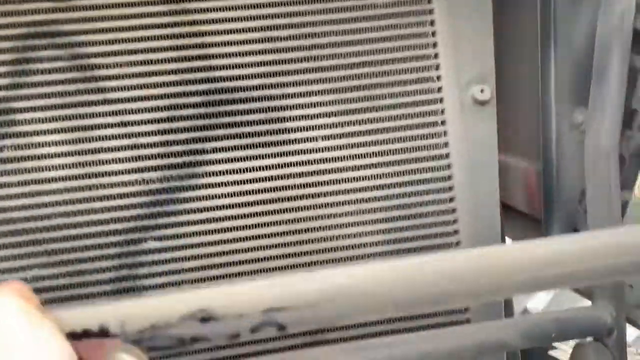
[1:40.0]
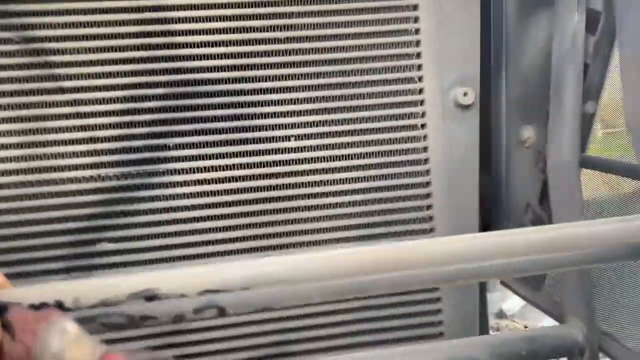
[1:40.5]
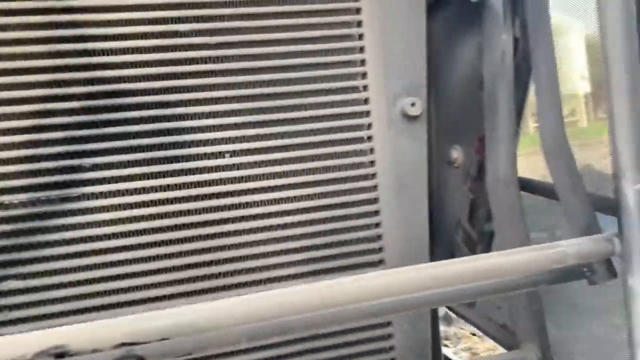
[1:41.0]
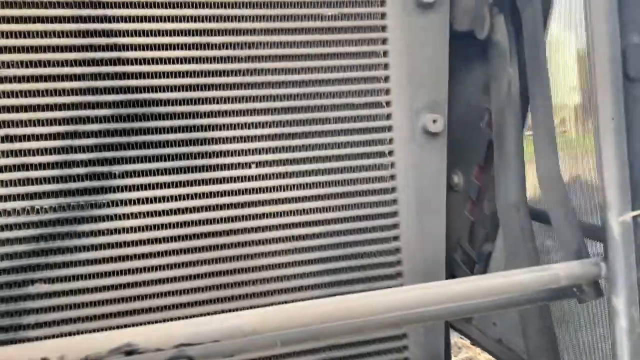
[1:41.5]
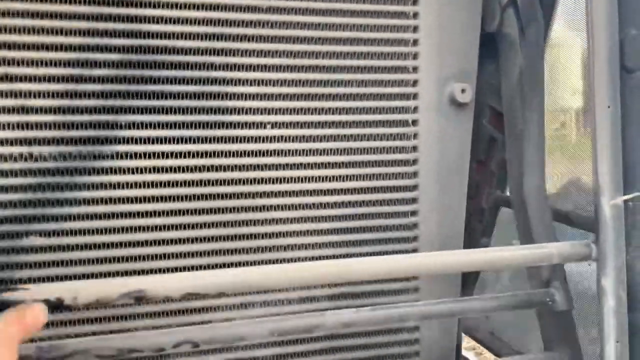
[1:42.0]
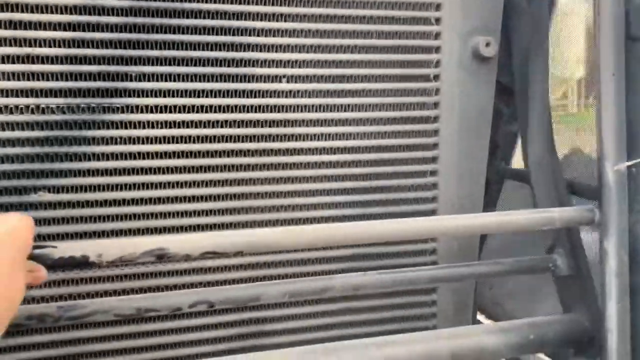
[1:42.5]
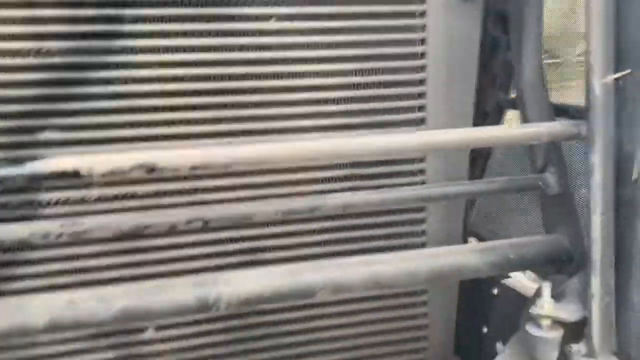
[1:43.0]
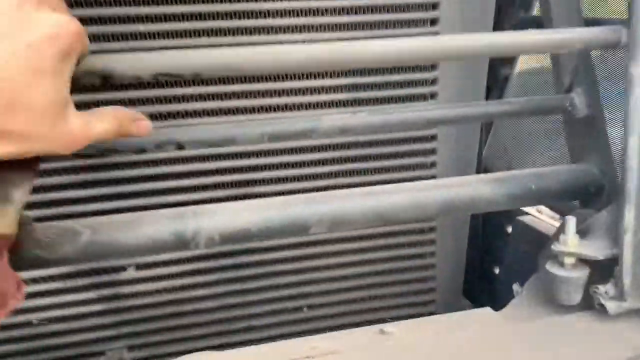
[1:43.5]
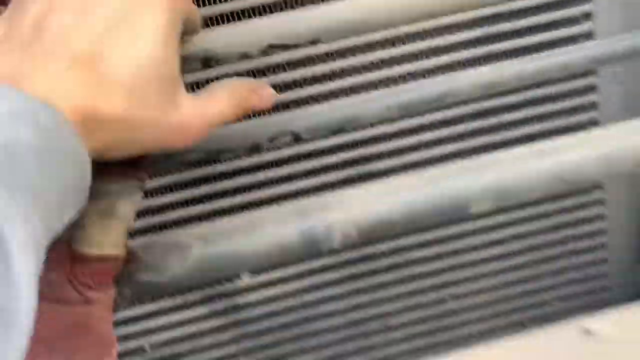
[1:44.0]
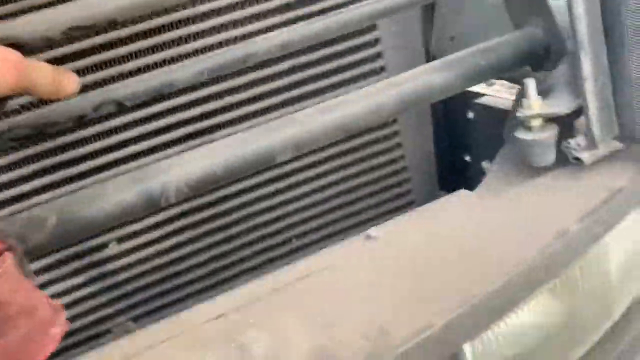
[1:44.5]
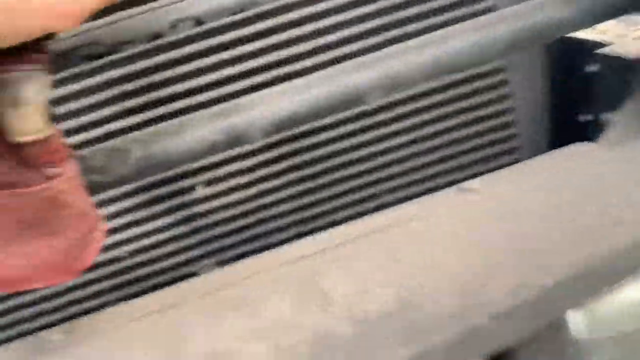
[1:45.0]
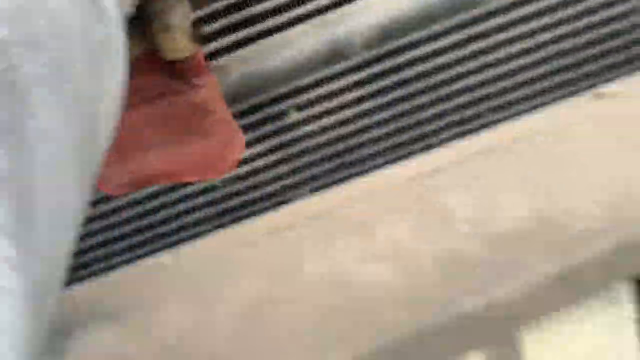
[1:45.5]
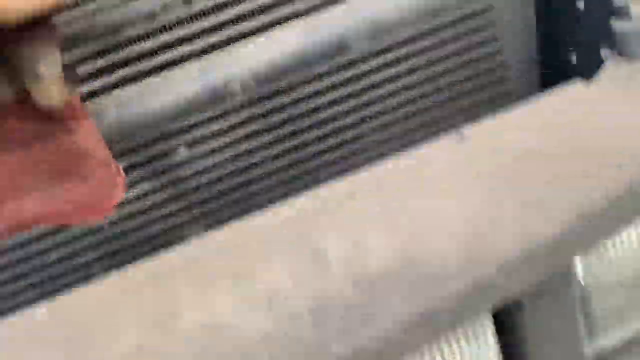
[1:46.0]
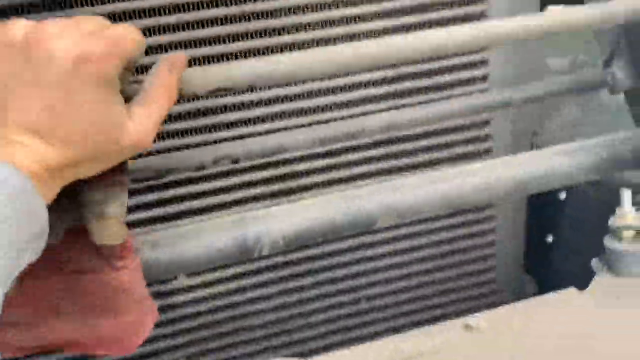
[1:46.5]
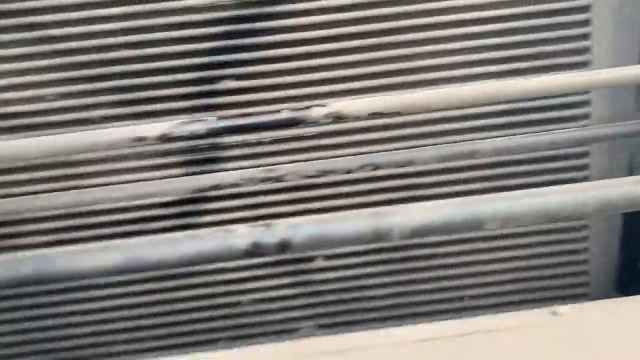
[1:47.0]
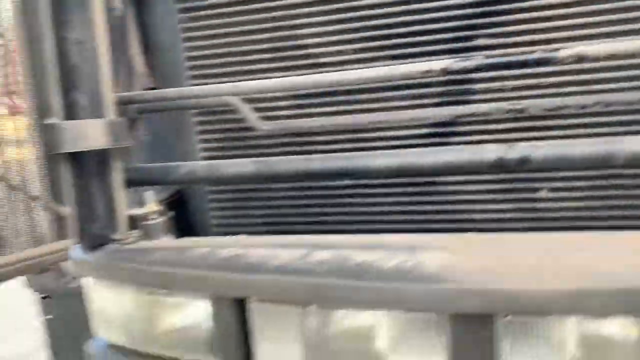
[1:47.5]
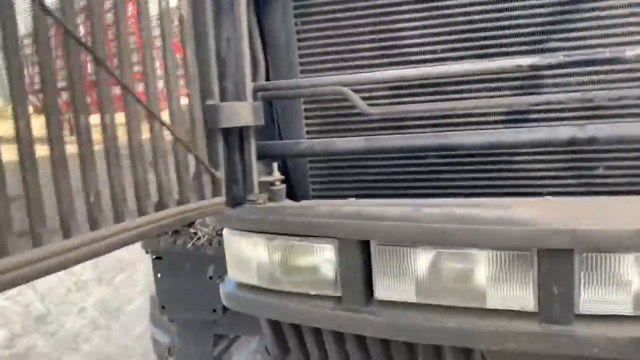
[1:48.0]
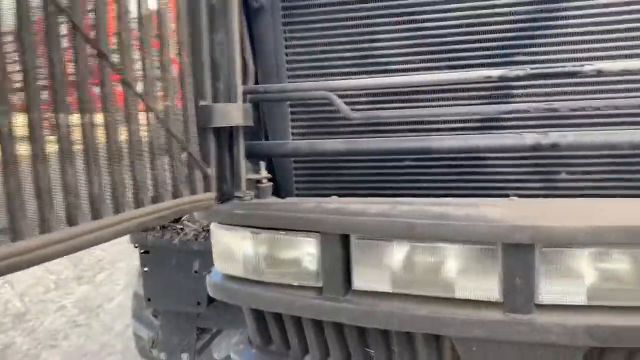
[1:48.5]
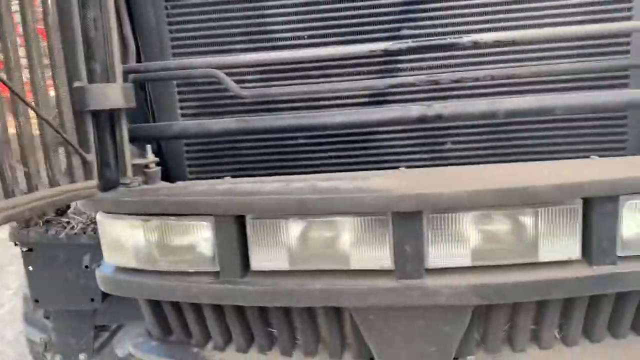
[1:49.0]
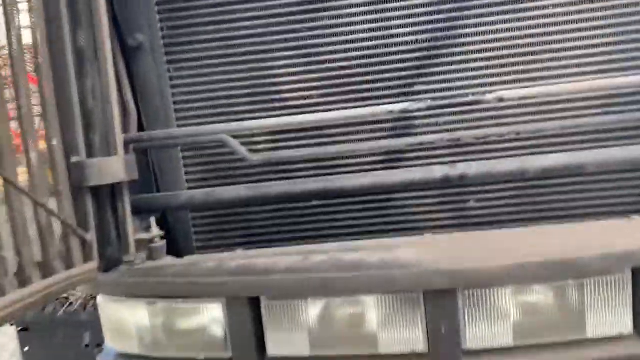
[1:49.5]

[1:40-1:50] The front part of the tractor remains in view as the man's left hand adjusts some thick black horizontal bars on the lower front part of the tractor, rotating them. They kind of look like a locking system that keeps the front part in place, or he may be closing it up. He then backs away, showing the open door on the left side and some of the tractor's headlights at the bottom.